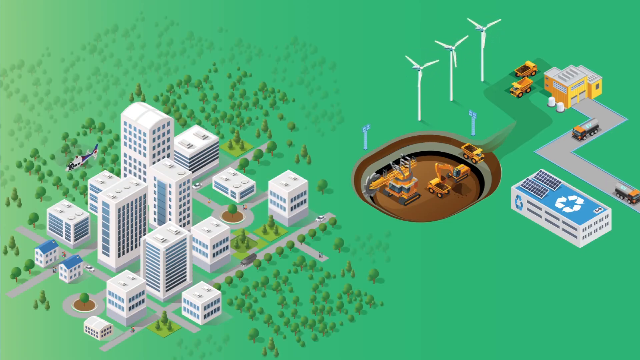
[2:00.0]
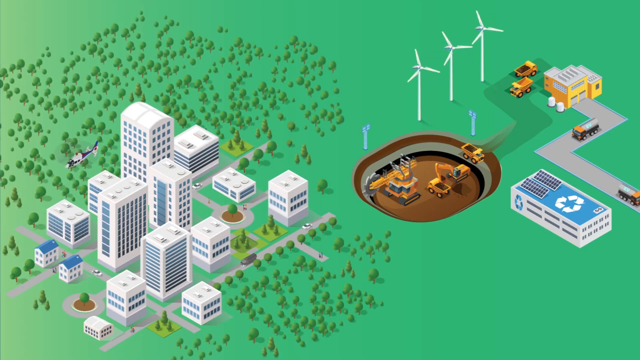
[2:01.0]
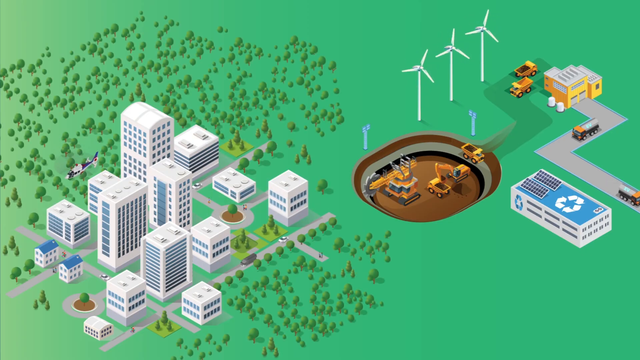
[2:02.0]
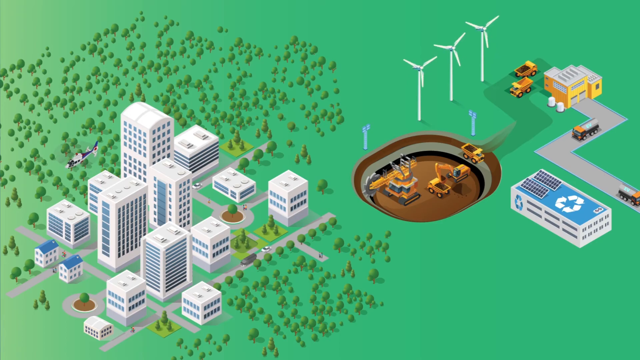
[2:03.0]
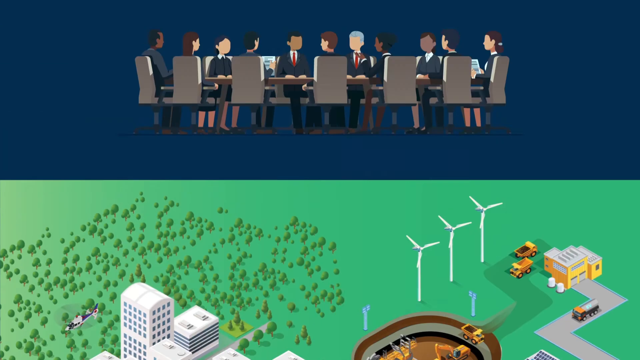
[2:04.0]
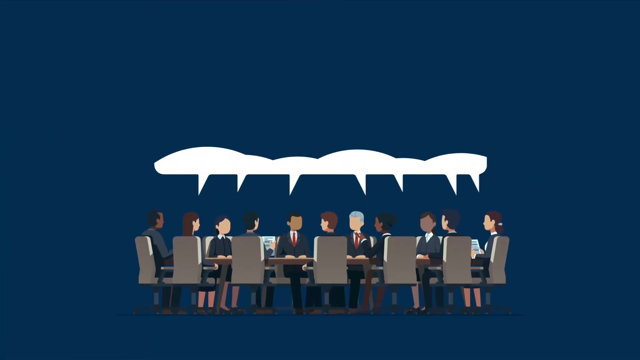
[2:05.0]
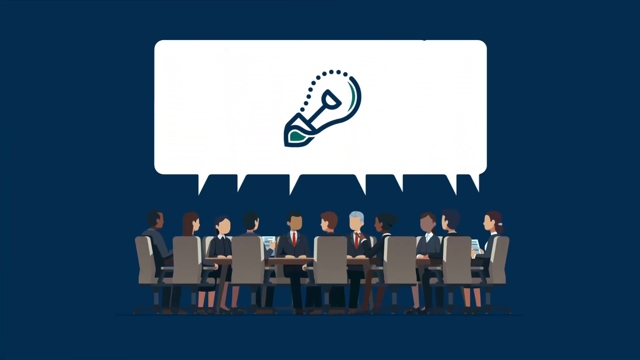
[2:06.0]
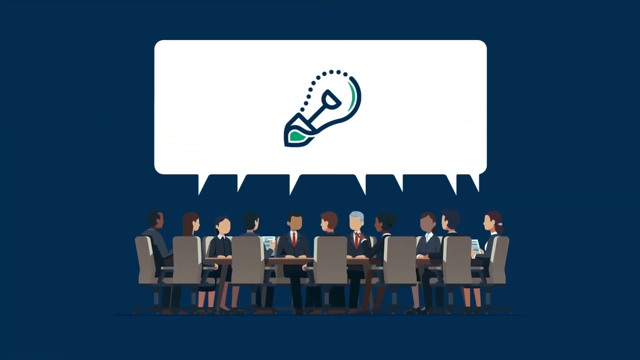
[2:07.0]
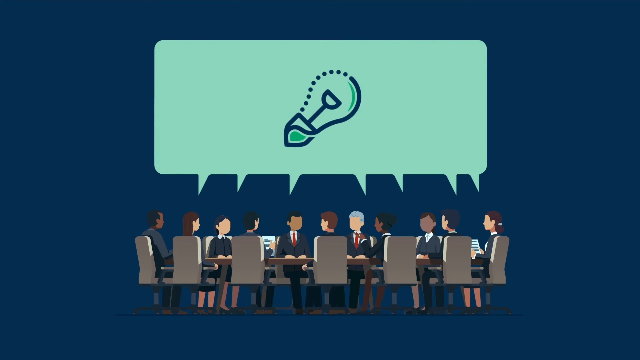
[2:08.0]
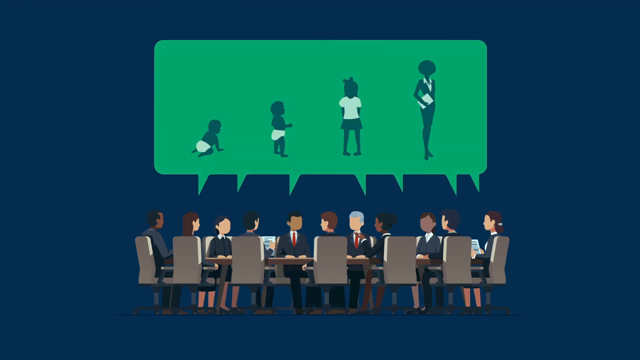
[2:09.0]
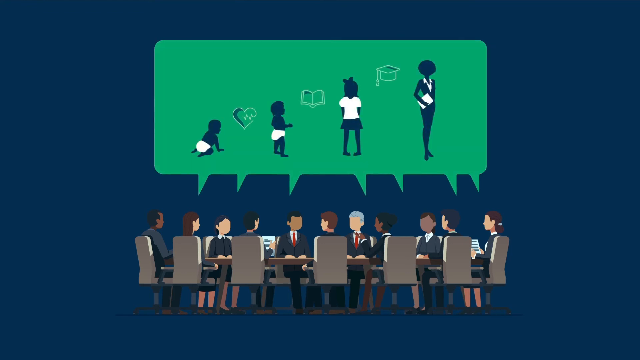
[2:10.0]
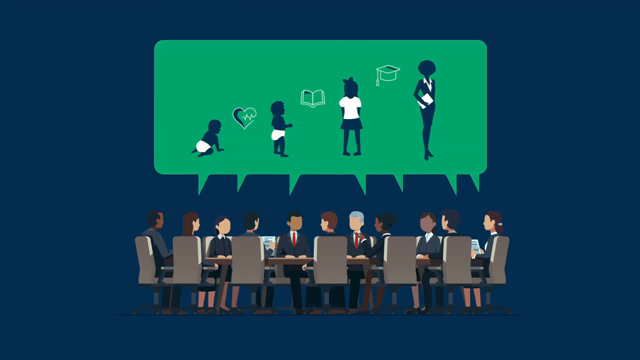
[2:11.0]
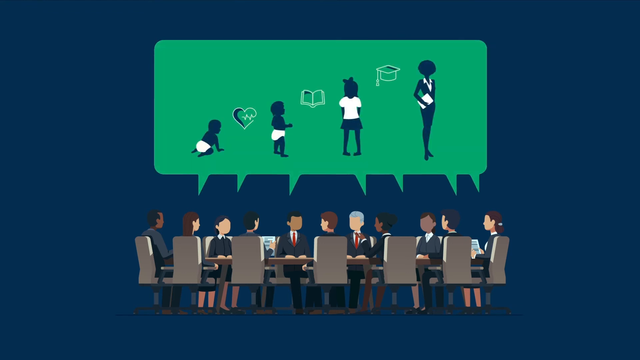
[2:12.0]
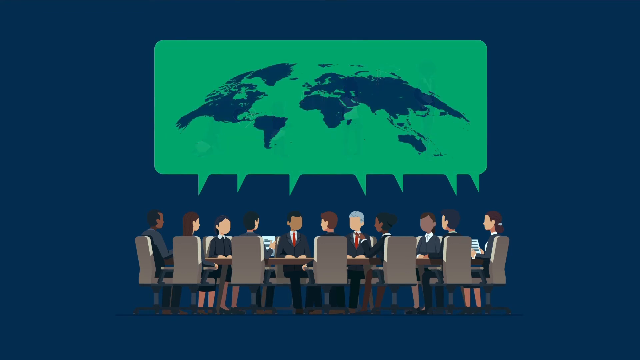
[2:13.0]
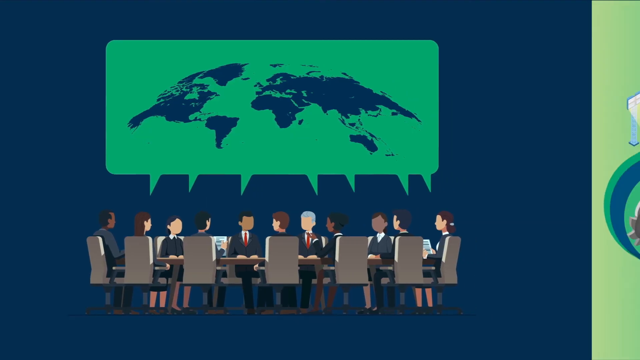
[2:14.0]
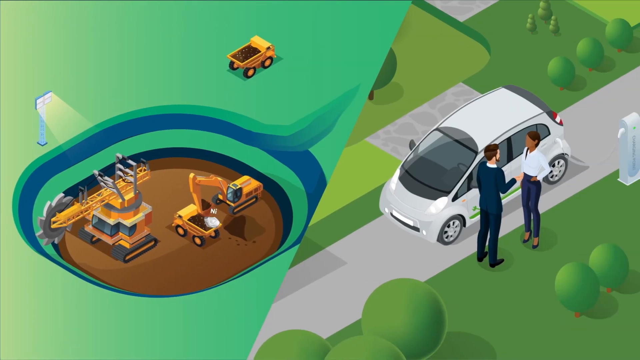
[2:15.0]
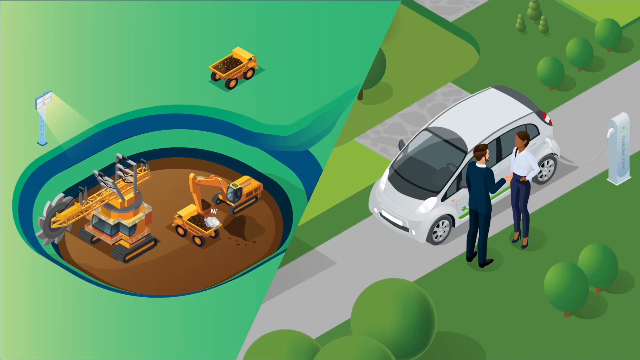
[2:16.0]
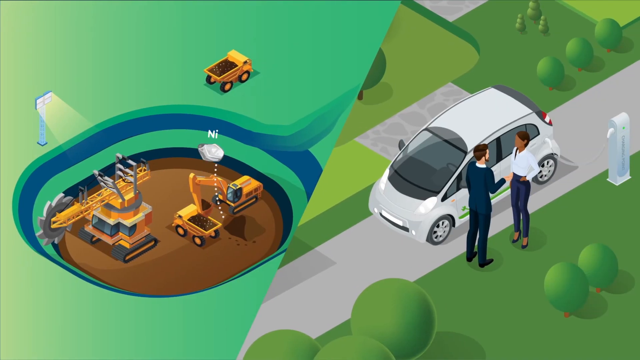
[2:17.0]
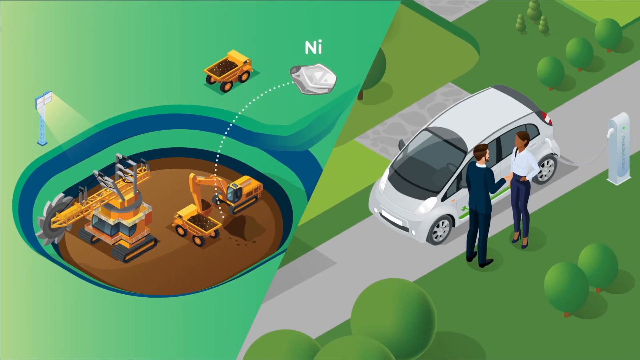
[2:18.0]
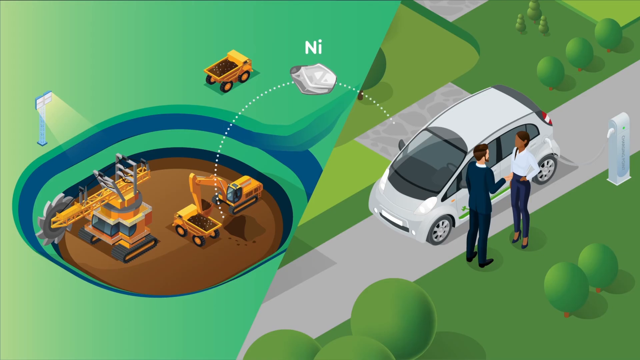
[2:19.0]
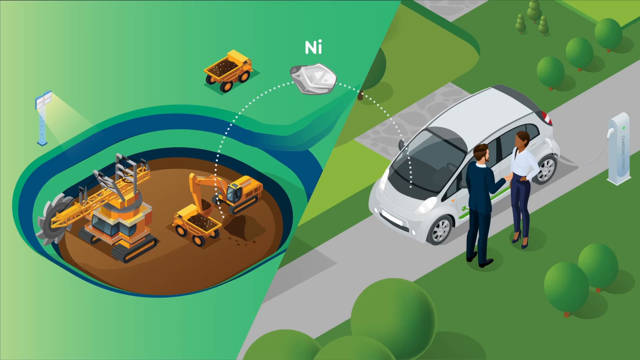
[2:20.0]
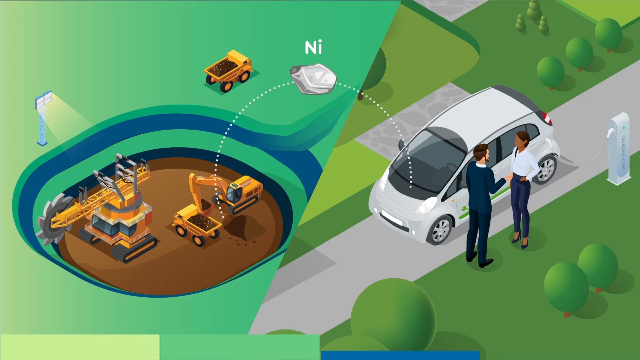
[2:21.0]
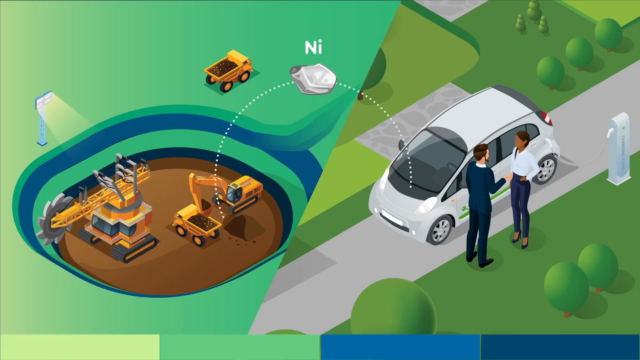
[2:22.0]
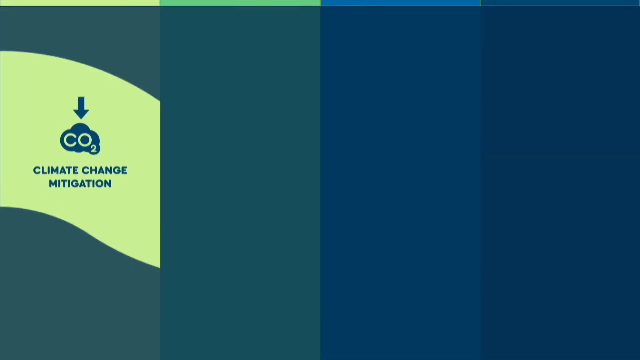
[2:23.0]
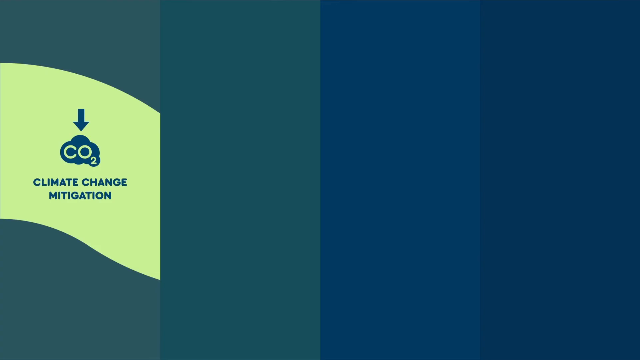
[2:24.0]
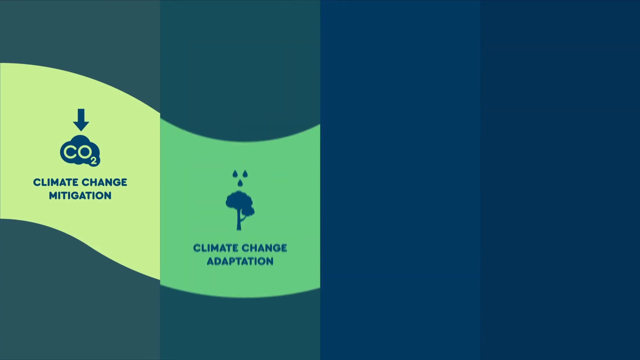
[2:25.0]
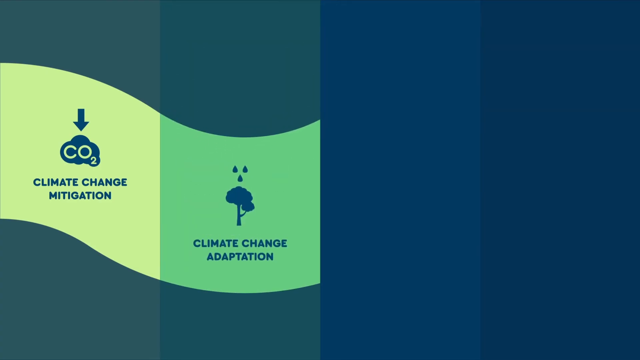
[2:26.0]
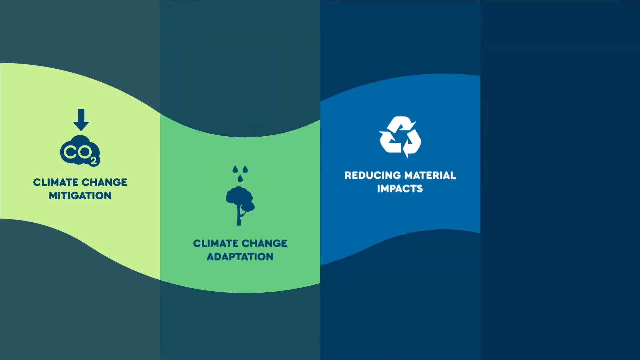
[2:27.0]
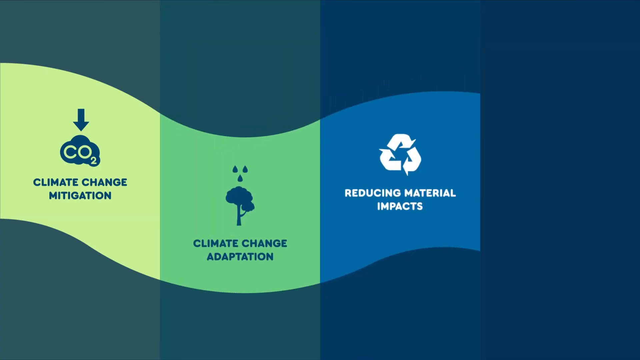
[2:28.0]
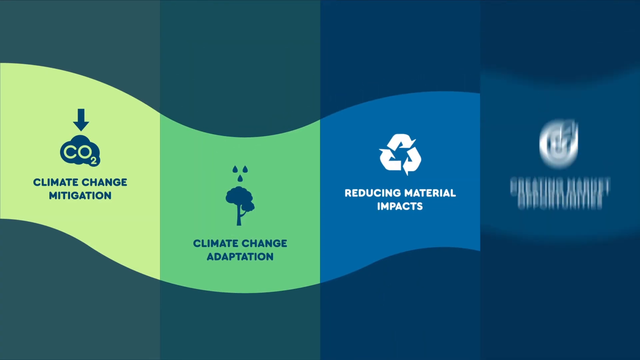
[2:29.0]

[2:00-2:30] The city has tall white buildings with many windows, trees around them and roads coming out from them. A construction site has construction equipment, dump trucks, a front loader and apparently a couple of buildings, with a driveway or road coming out from the garage where the construction vehicles are apparently kept. What looks like a hospital has a helipad and a couple of solar panels on top. A helicopter takes off and a little car drives. Next, a drawing shows people as if at a board meeting with something big and green; each one speaks, with ideas appearing above their heads. They appear to be talking about the future, as the ideas start with a baby, then a toddler, a small child and a woman. A picture of the globe with different countries follows. A close-up of a construction site shows digging, with dump trucks, the front loader and what is apparently another type of construction vehicle. The picture then splits in half, showing two people, apparently a man and a woman, talking while standing by a small white car, probably electric. The man wears a suit and has brown hair; the woman has dark hair and dark skin and wears a white blouse, jeans and high heels. There is a road, grass and trees. It appears the digging is for nickel to power the electric vehicle; "NI" is shown as a construction worker digs for the mineral. Then a chart shows "climate change mitigation," "climate change adaptation," "reducing material impacts" and "creating market opportunities."